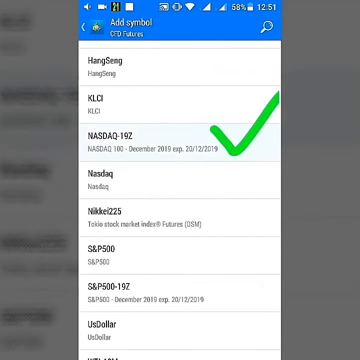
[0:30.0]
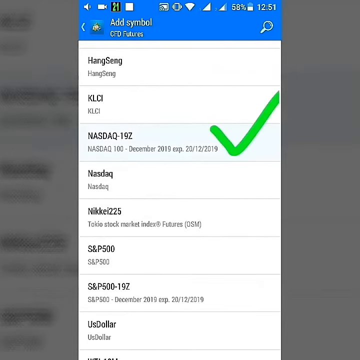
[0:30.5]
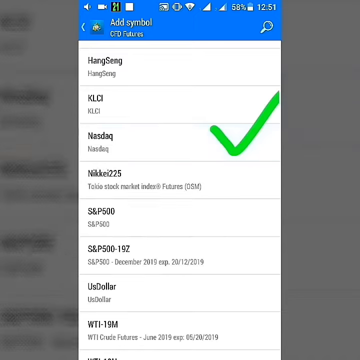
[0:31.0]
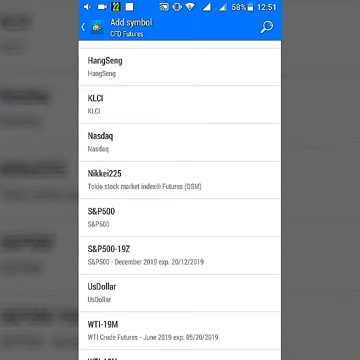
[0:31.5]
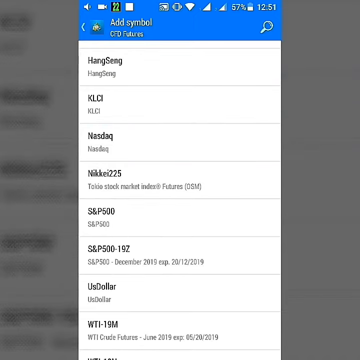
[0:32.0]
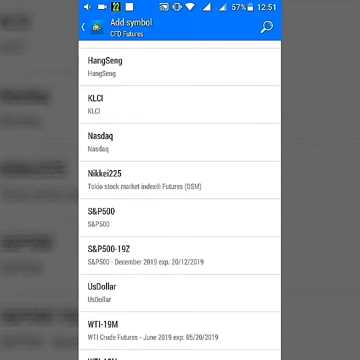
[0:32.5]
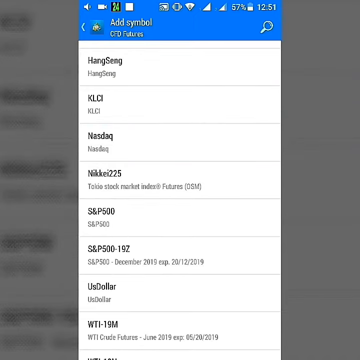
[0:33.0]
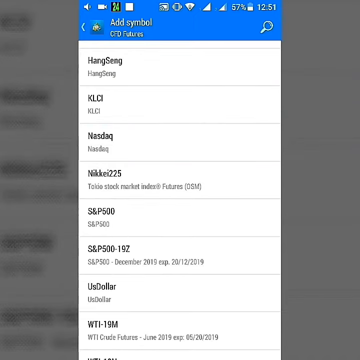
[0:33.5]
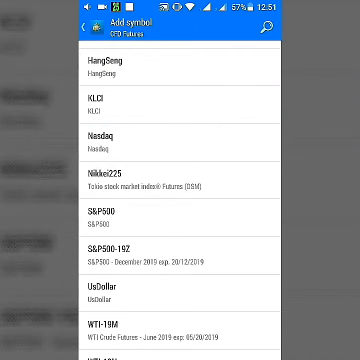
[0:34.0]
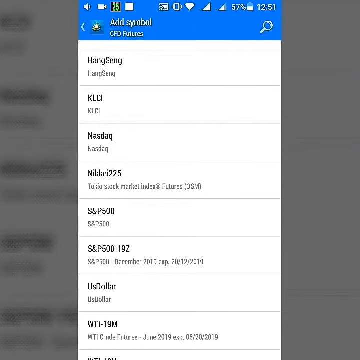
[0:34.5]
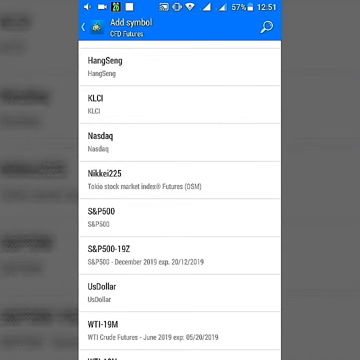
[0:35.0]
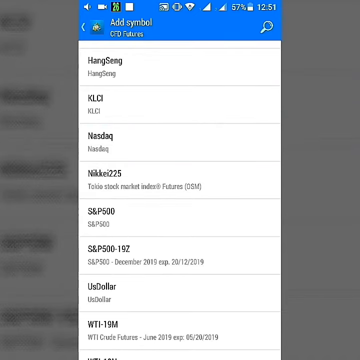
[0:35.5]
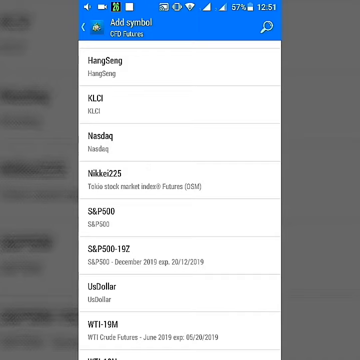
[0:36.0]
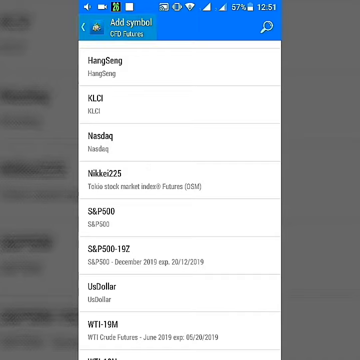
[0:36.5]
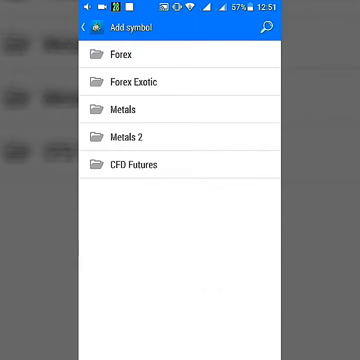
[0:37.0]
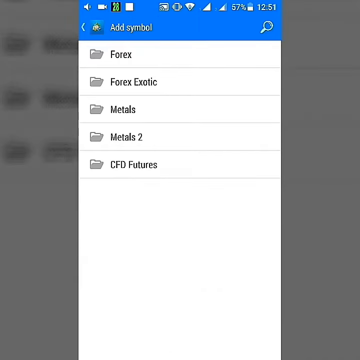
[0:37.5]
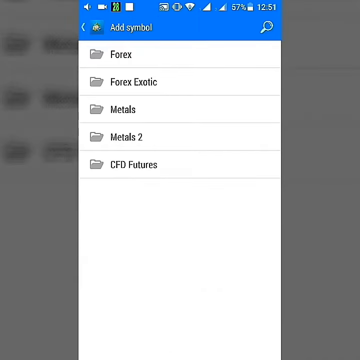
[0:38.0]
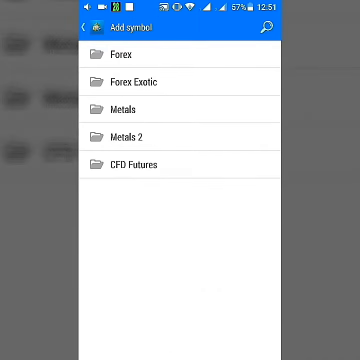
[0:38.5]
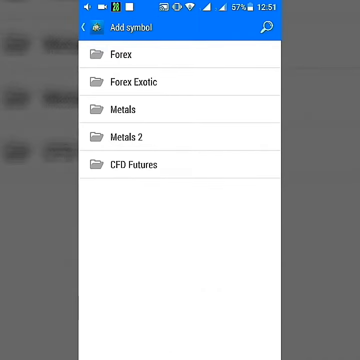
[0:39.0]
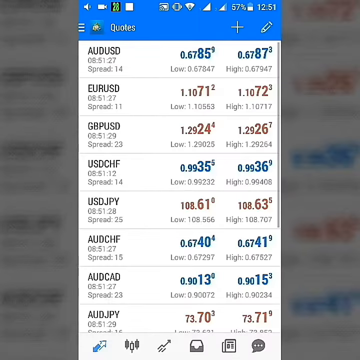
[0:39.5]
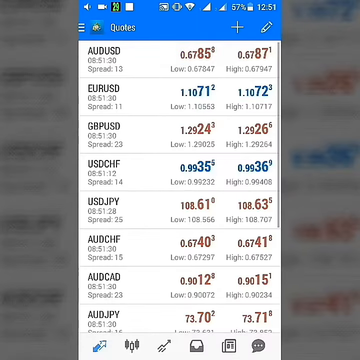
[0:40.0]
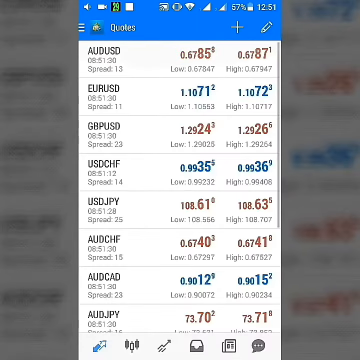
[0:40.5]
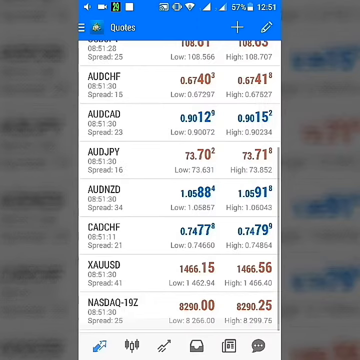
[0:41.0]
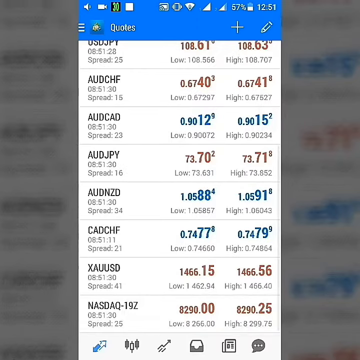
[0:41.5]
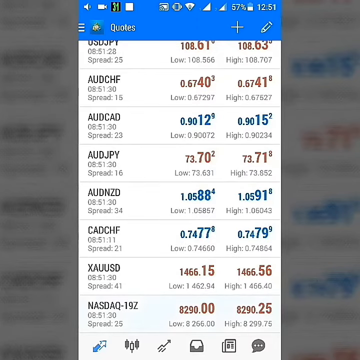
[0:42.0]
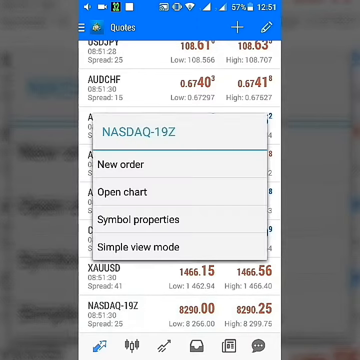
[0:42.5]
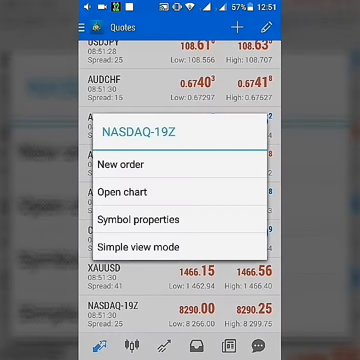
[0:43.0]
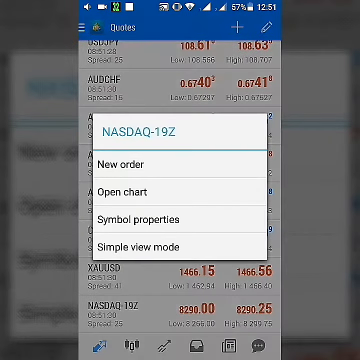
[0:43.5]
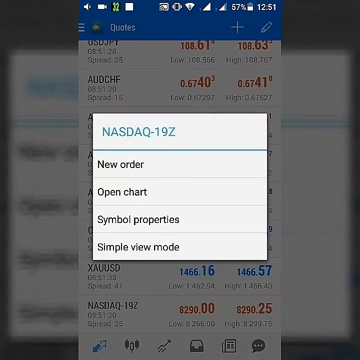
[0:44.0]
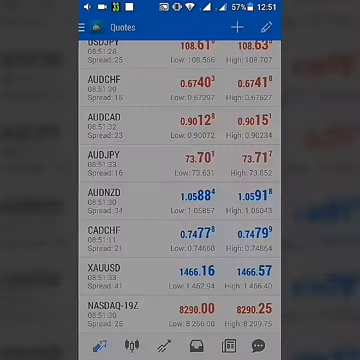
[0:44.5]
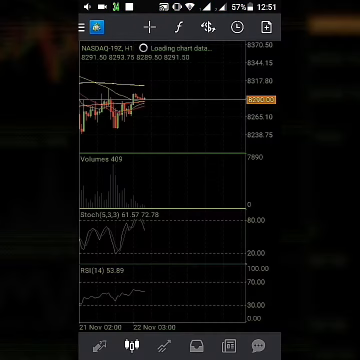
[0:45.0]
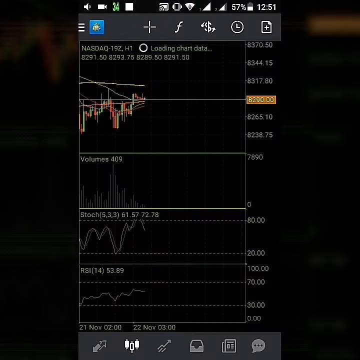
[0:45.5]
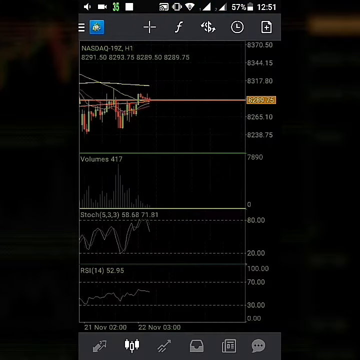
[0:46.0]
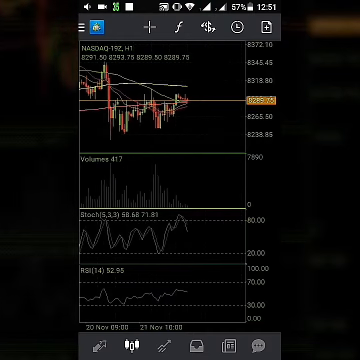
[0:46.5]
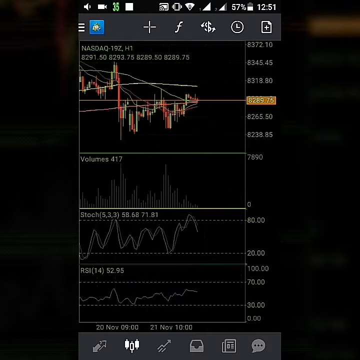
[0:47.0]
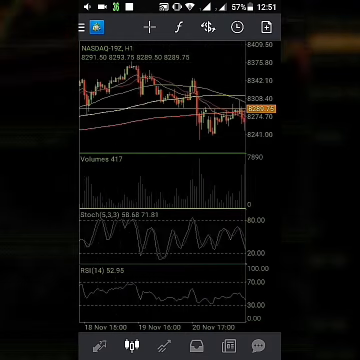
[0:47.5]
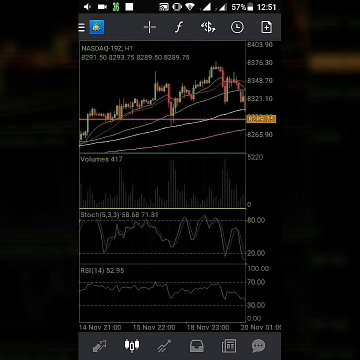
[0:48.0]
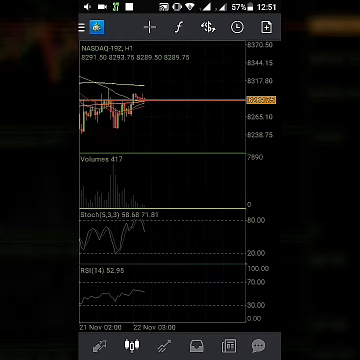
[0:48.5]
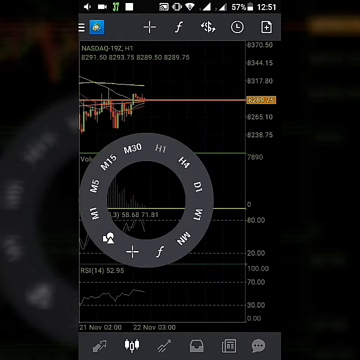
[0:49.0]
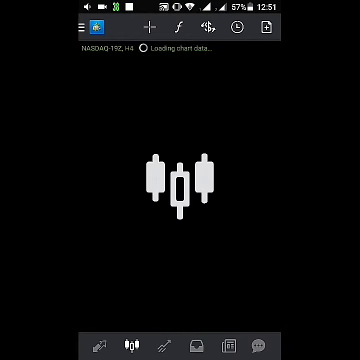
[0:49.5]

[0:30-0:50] A page showing what looks like stock market information appears on a cell phone or tablet, with a blue banner on top. Against a white background below, the list reads from the top: Hang Seng, KLC 1, Nasdaq, Nikkei 225, S&P 500, S&P 500-19 Z, and the US dollar. A new page shows folders lined up, starting from the top: Forex, Forex exotic, metals, Metals 2, and finally CFD futures. The screen then scrolls through information on the phone, such as EUR USD and GBP USD, showing the spread and the low and high of the day, along with AUD CAD. Suddenly a pop-up appears over the financial information, reading "Nasdaq 19 Z" in blue text, followed below by "new order", "open chart", "symbol properties", and finally "simple view mode".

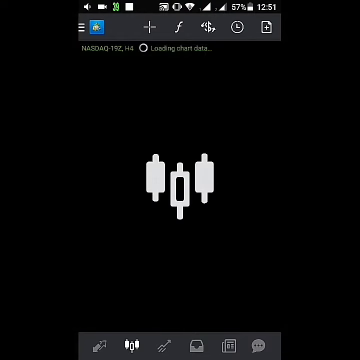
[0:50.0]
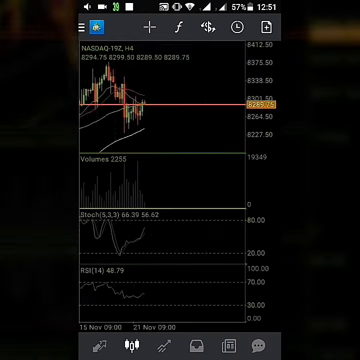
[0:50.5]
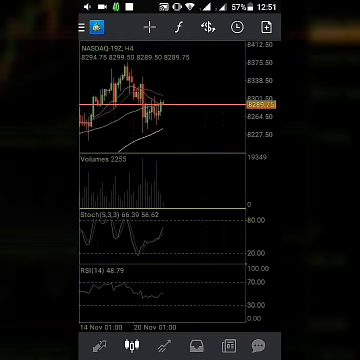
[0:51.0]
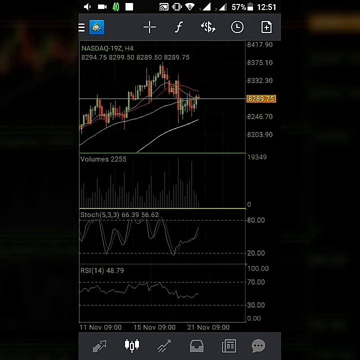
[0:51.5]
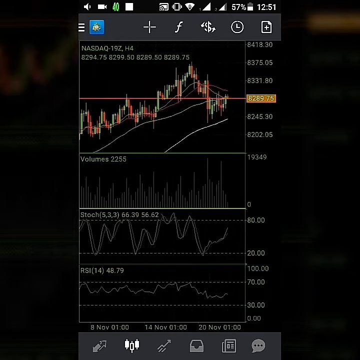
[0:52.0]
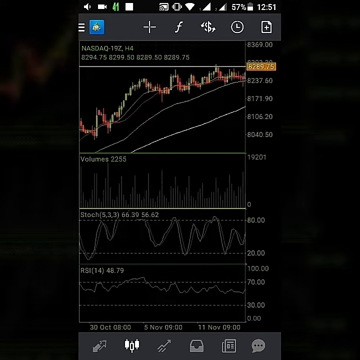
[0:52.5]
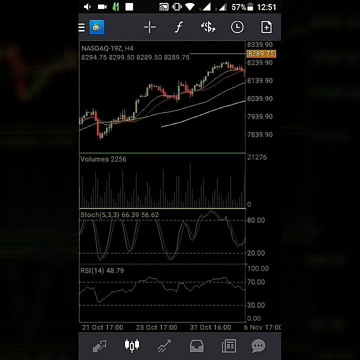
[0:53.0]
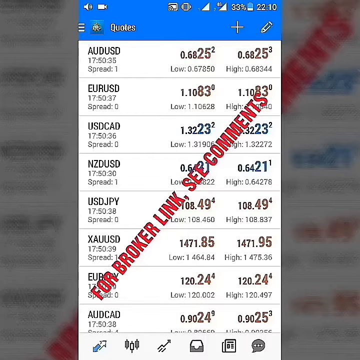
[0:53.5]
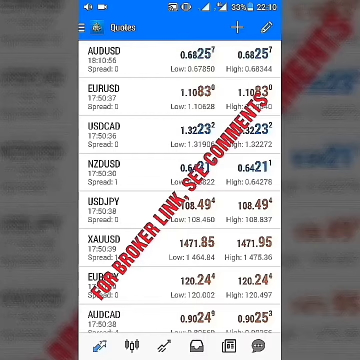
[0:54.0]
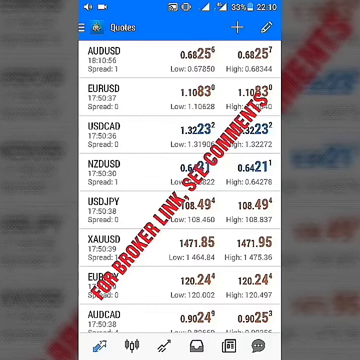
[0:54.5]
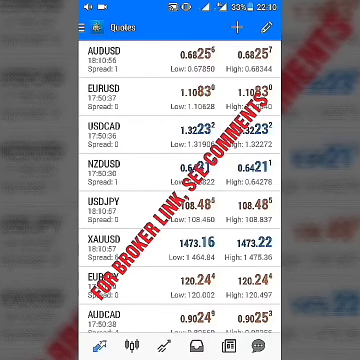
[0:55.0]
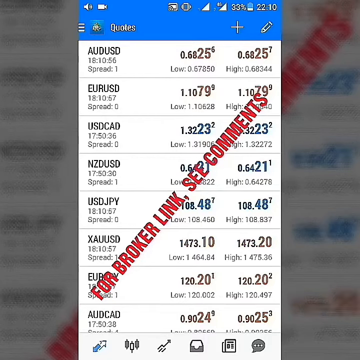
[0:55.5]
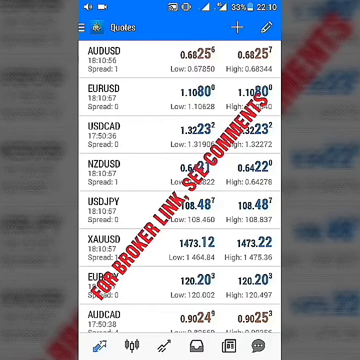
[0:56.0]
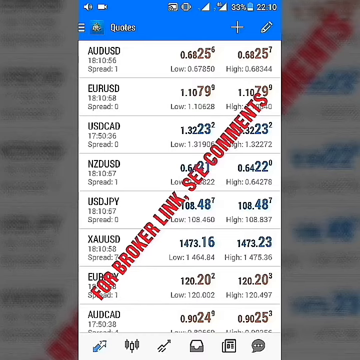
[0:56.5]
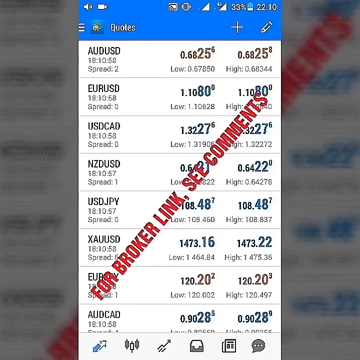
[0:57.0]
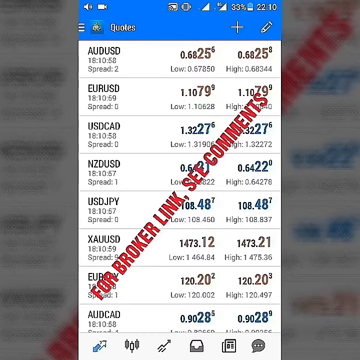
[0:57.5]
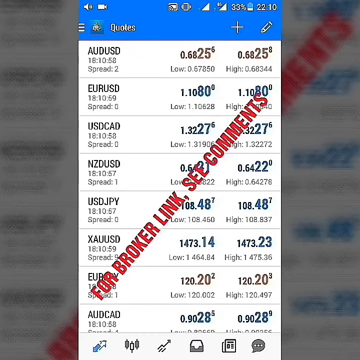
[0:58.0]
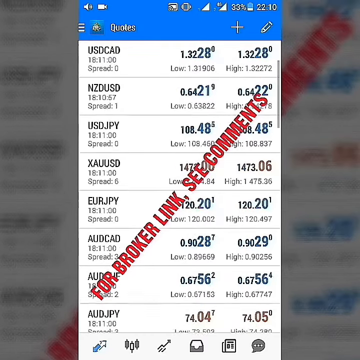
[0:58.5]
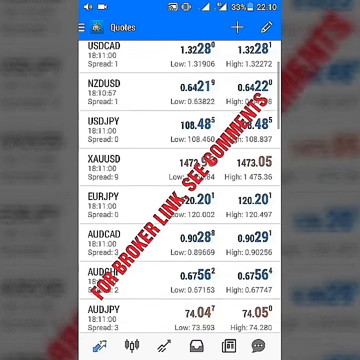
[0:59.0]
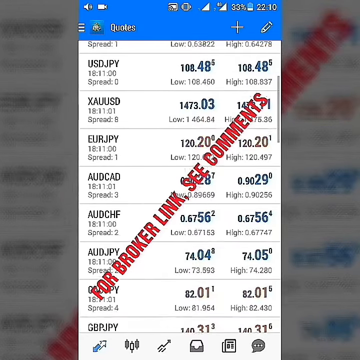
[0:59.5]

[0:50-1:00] An up-close view shows a tablet or cell phone screen. Against a black background, three icons that look like plugs appear in the center. It then opens what looks like a view of the stocks: against the black screen, a moving graph shows volumes, the stock, and the RSI, with the stock movement displayed in red, yellow and green. The scene suddenly changes to a white background with financial information in black text. EURUSD shows its spread, low and high, followed below by USDCAD with a spread of 0, a low of 1.3223 and a high of 1.3223. Below that, USDJPY shows its spread, low and high. Bold red text running diagonally across the screen from the lower left to the upper right reads "for broker link see comments".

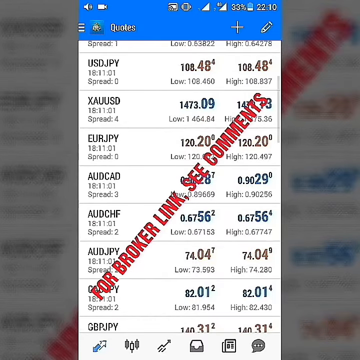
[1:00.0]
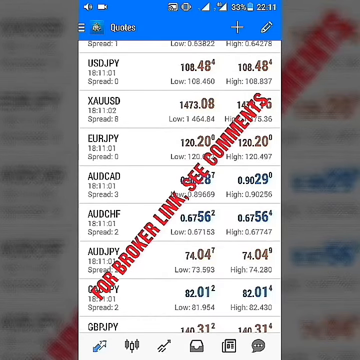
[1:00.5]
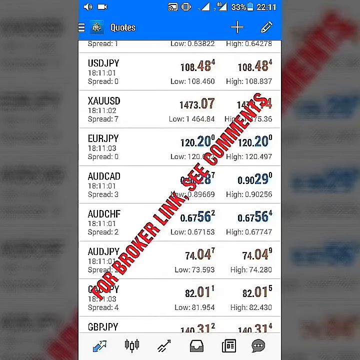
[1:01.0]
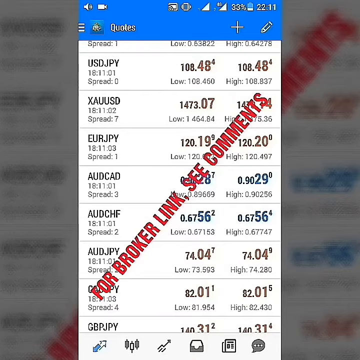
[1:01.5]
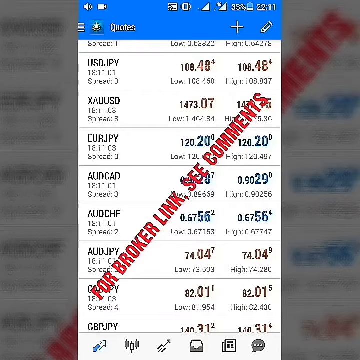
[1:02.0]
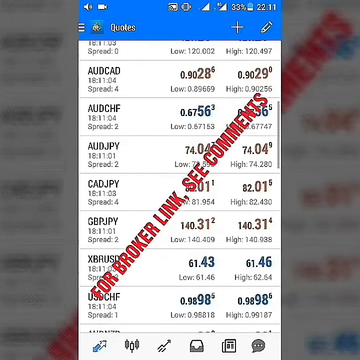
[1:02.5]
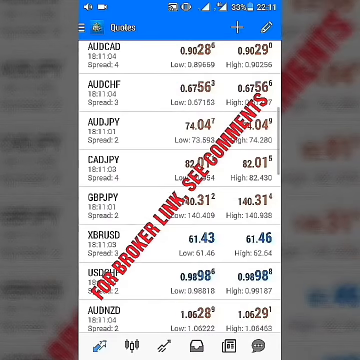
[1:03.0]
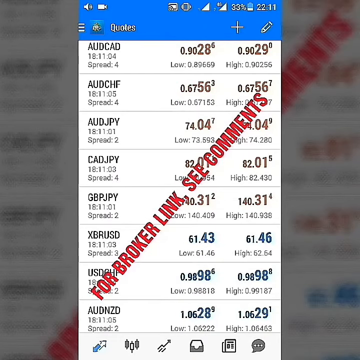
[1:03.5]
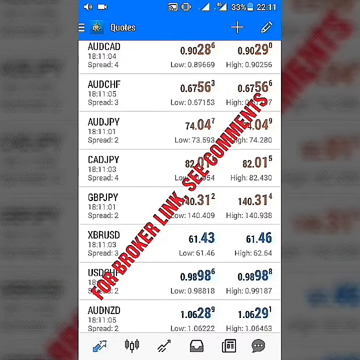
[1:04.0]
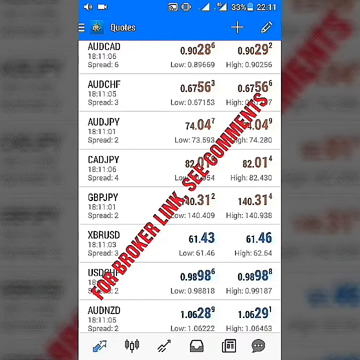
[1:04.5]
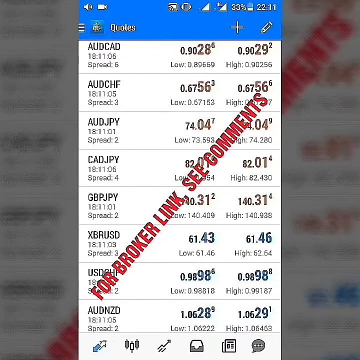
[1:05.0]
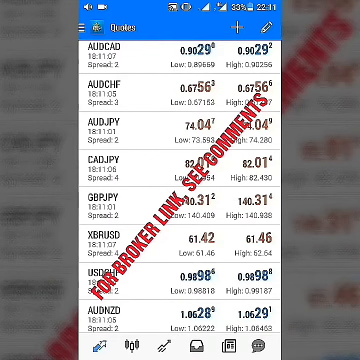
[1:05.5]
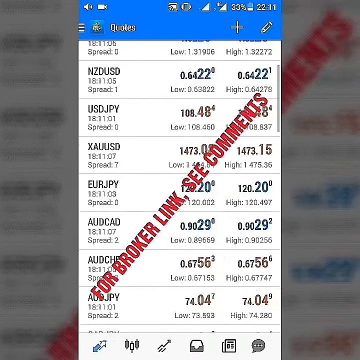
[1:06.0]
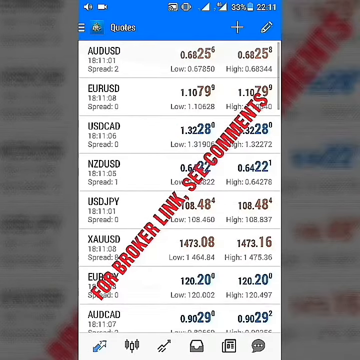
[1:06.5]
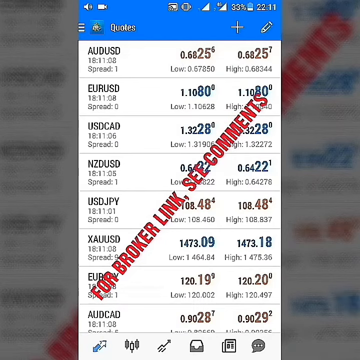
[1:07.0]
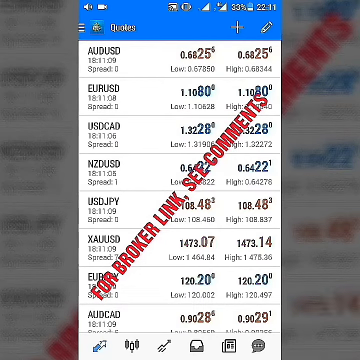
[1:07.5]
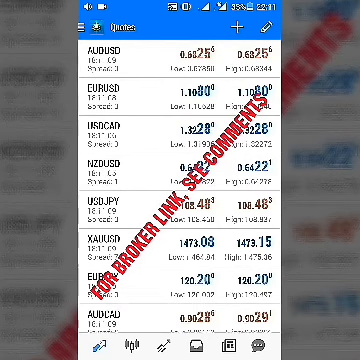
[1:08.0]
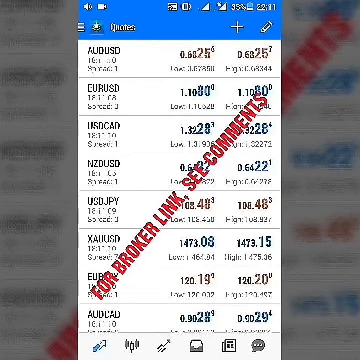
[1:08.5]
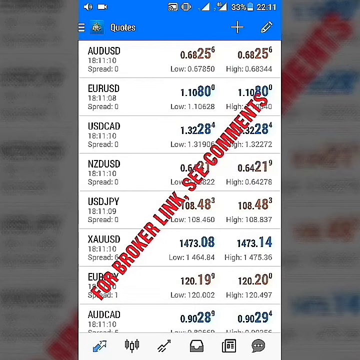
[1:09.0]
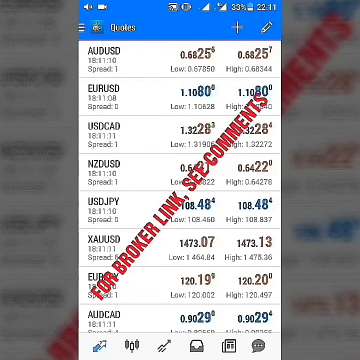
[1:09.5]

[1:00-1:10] The screen of a cell phone or tablet has a blue banner on top showing the battery at 33% and the time as 2210. On the left side of the banner, the header reads "quotes". Below is financial information: USD JPY at 108.48 for a low and 108.48 for a high, then EUR JPY with a high of 120.20 and a low of 120.20. Bold red text runs diagonally across the screen from the lower left to the upper right, reading "for broker link see comments". The list scrolls, showing CAD JPY and XBR USD with their spread information. AUD NZD has a spread of 2, a low of 1.0628 and a high of 1.0629. Scrolling continues until XAU USD, with a spread of 4 and the time 1811.